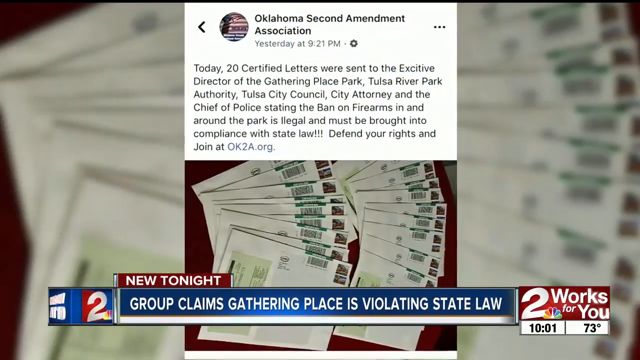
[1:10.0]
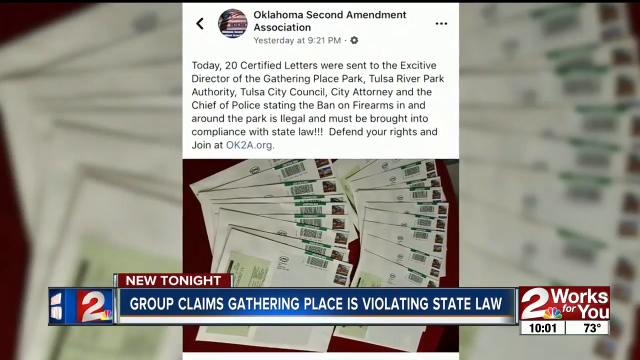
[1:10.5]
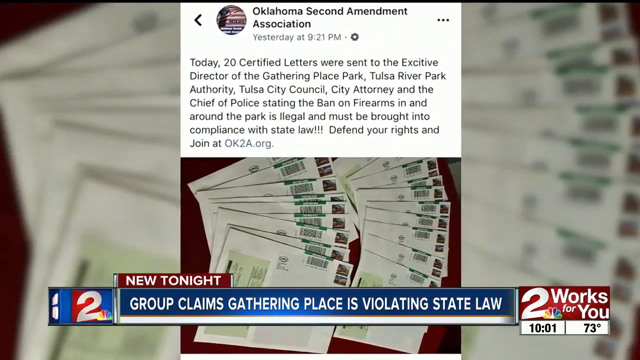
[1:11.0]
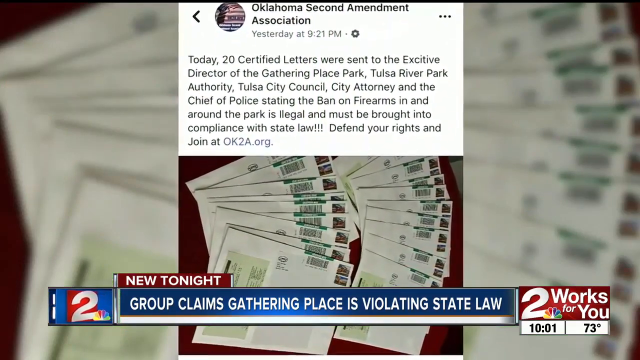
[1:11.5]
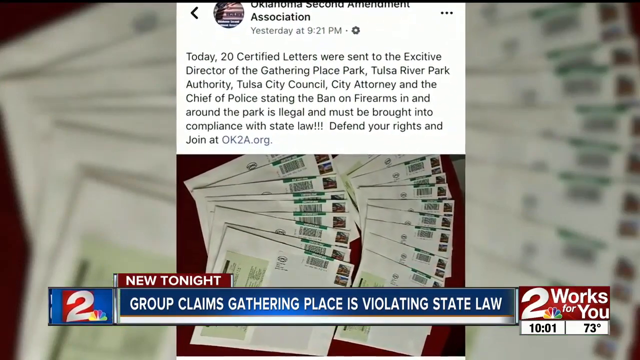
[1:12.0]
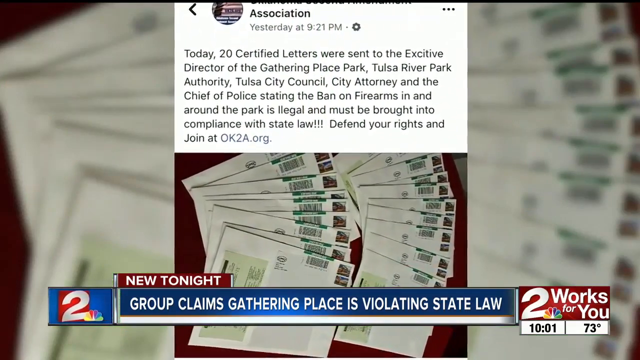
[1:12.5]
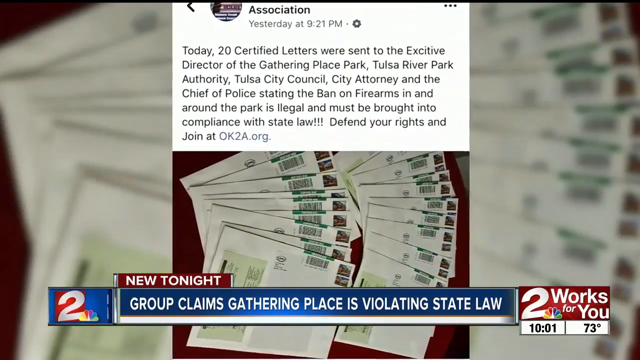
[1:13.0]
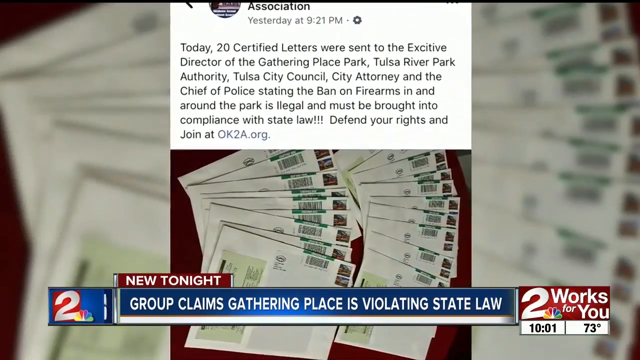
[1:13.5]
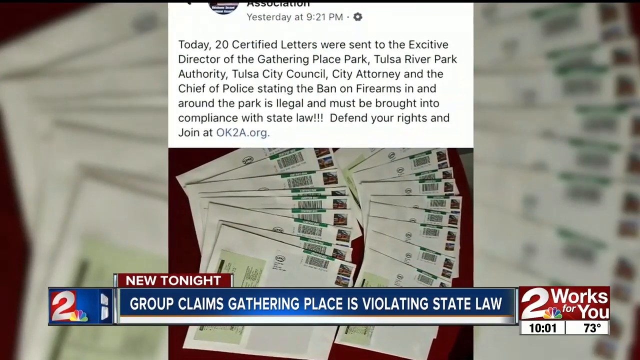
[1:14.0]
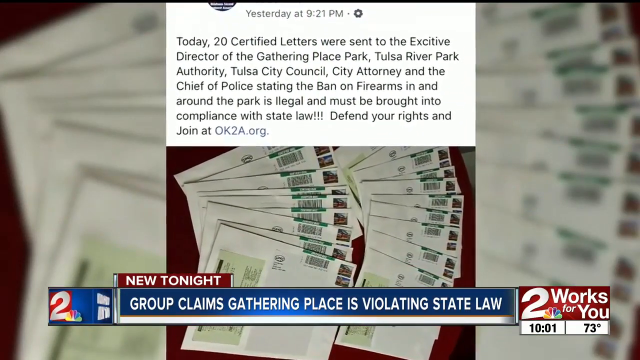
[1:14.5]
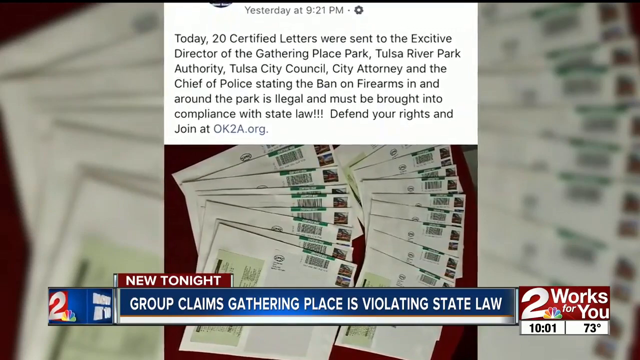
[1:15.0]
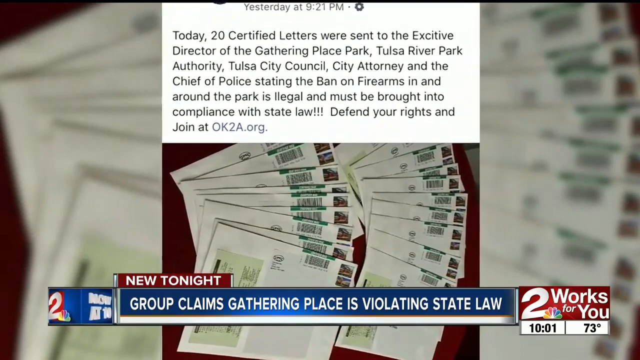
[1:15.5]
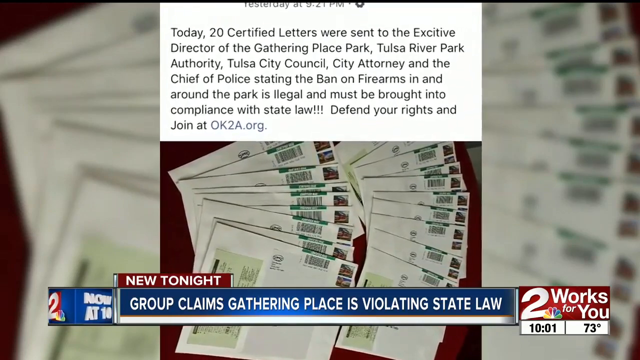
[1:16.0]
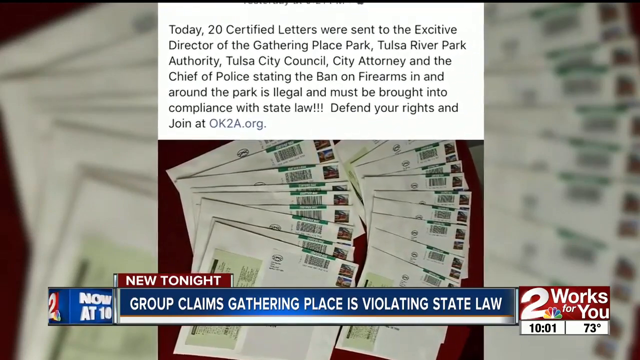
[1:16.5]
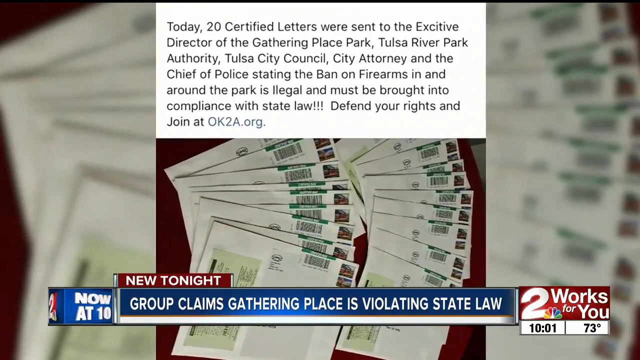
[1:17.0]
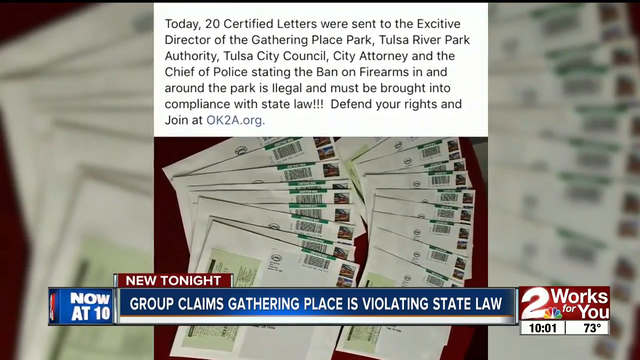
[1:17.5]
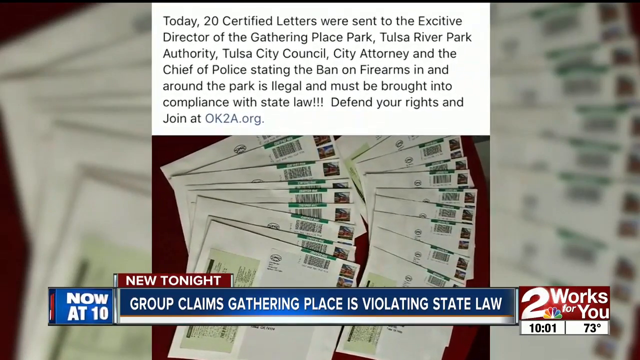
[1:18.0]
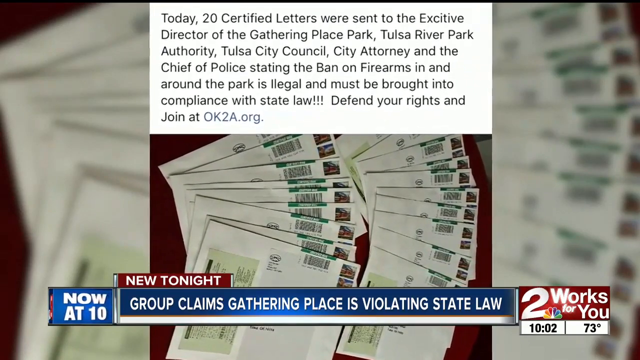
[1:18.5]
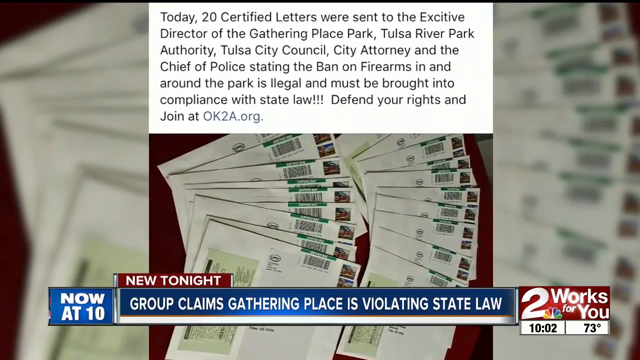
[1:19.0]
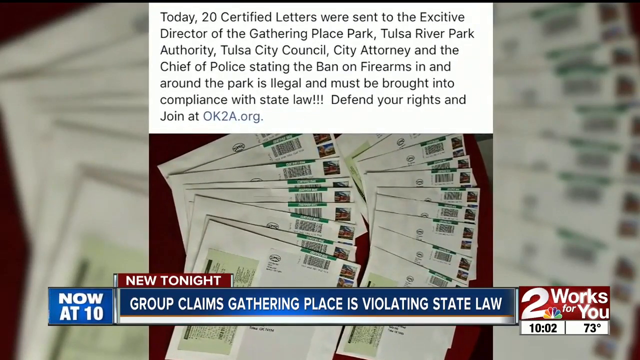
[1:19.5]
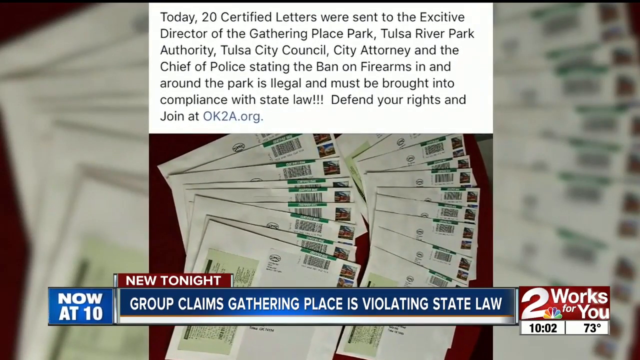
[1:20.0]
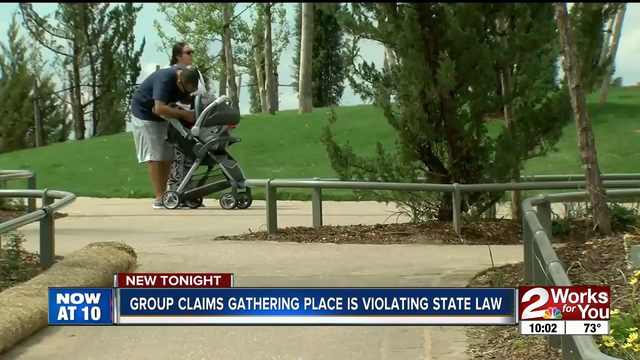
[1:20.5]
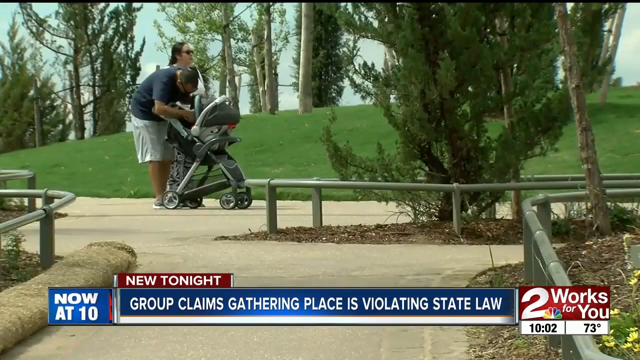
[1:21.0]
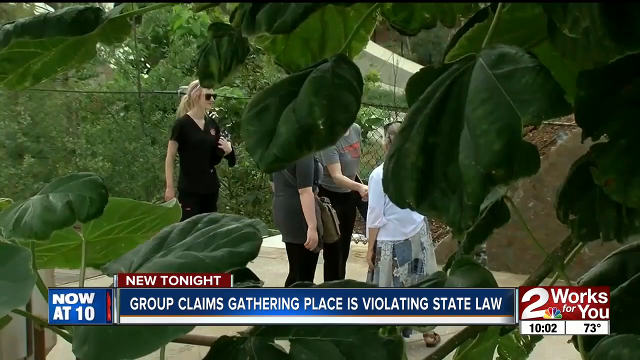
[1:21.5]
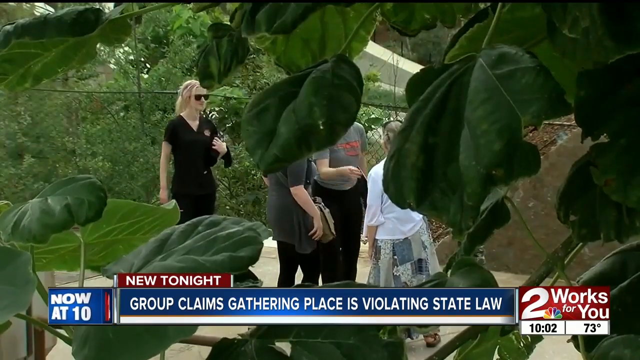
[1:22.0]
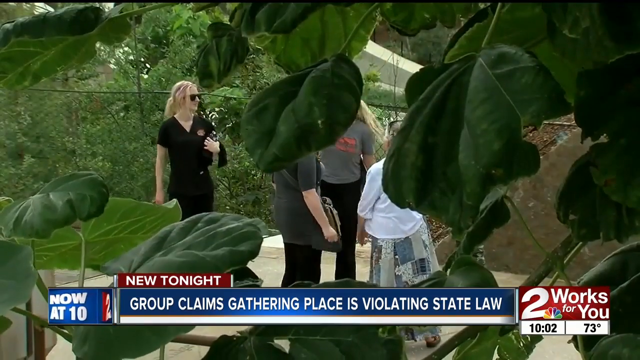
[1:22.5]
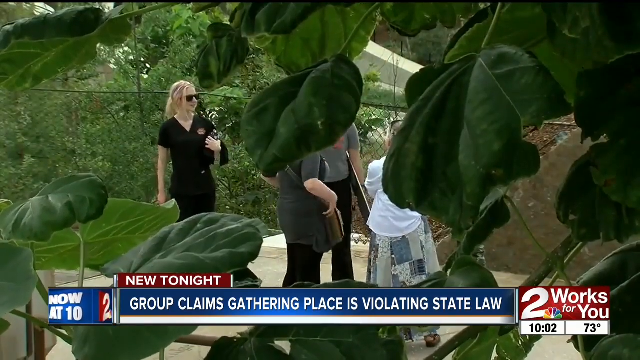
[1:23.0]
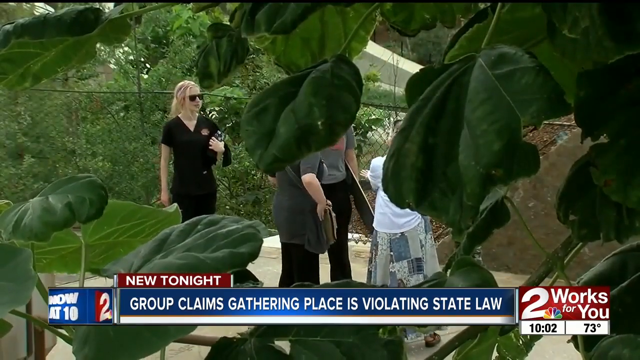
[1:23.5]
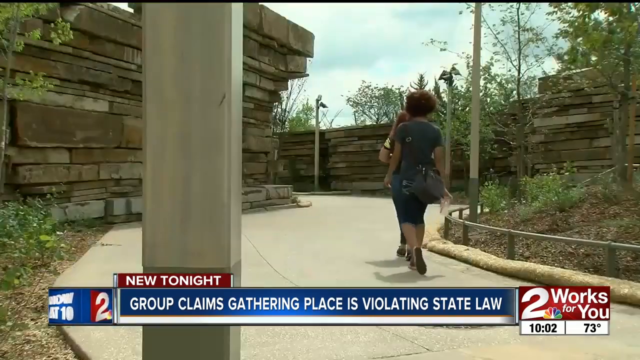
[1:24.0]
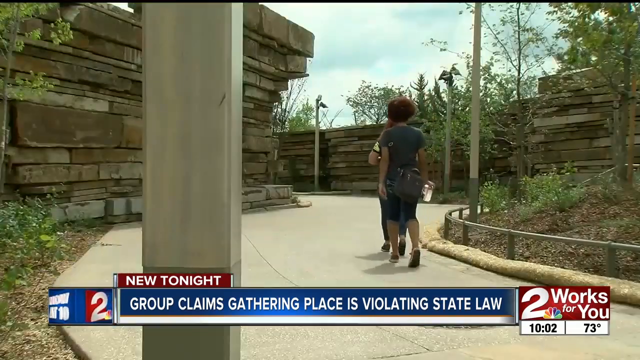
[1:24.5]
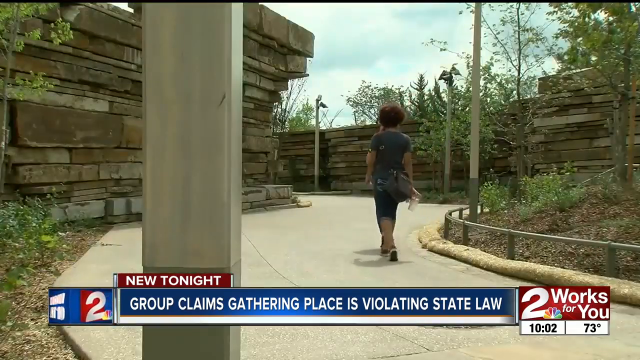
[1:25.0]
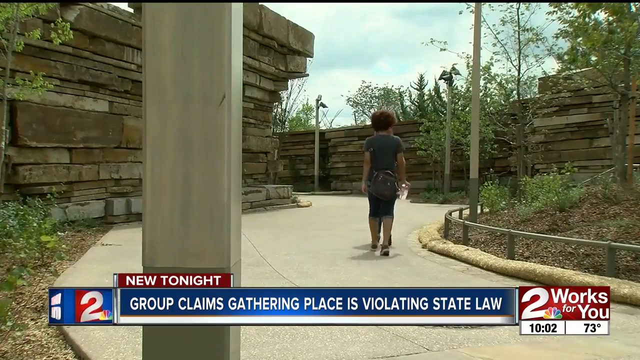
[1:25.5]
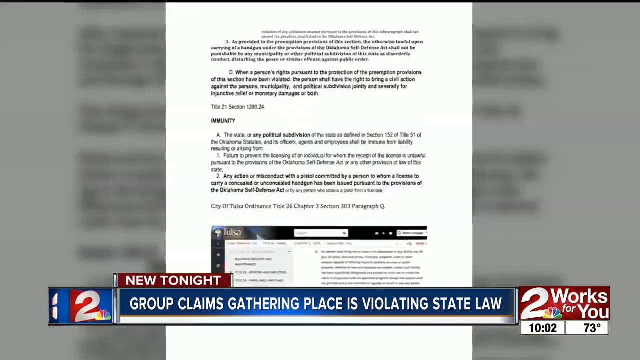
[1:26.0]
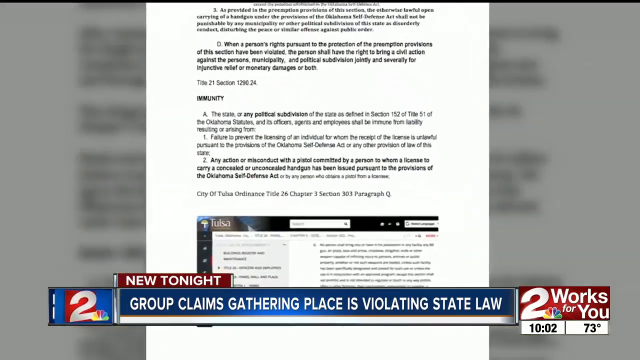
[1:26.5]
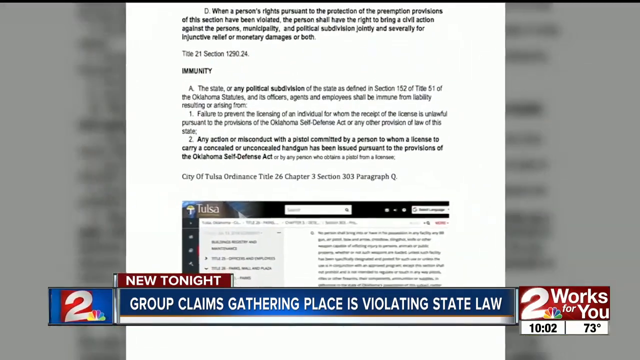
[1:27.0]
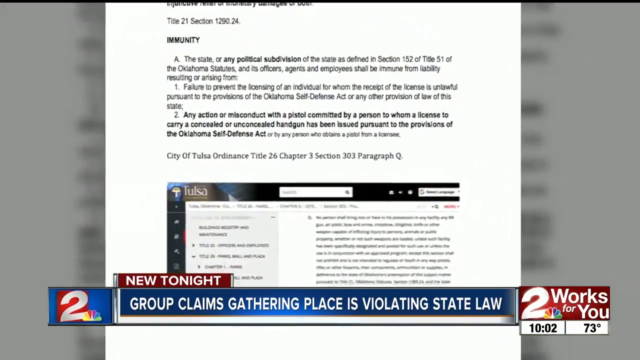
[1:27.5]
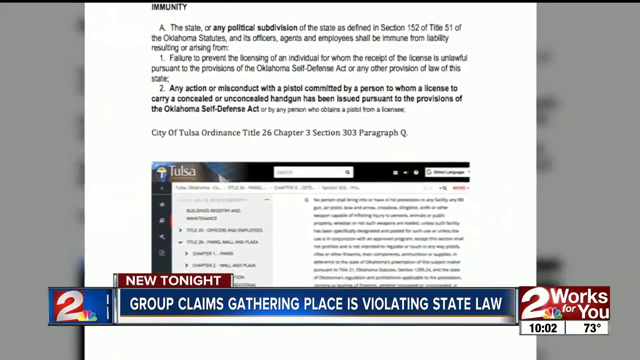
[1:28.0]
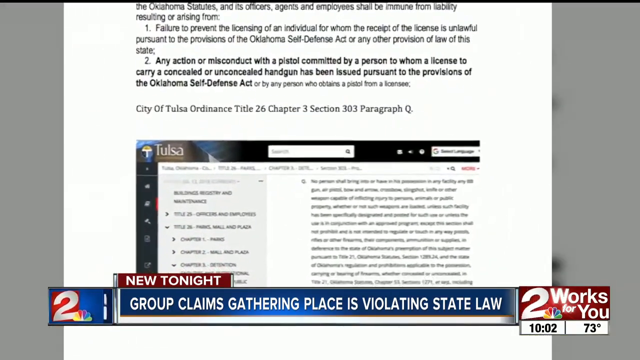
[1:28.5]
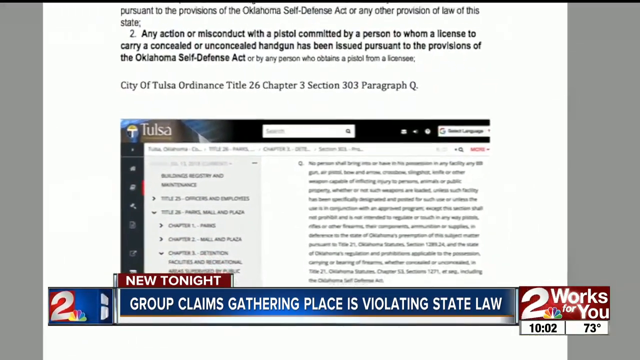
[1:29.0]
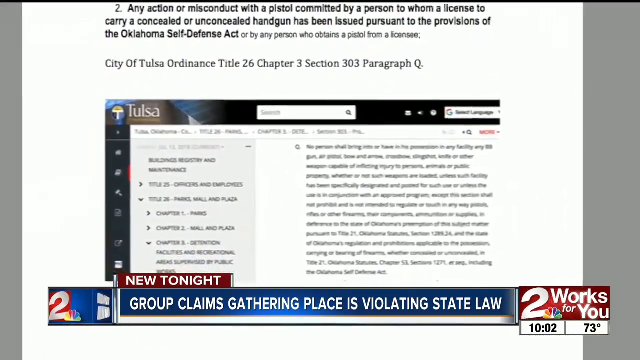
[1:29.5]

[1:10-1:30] On-screen text states that certified letters were sent to an executive director, a park authority, a city council, a city attorney and a chief of police, and that "the ban of firearms in and around the" park "is illegal". The words "violating state law" are shown. Two people hold babies, and other people seem to be communicating. The video switches to individuals taking a video next to some trees, then back to a woman walking down the street with a paper of some sort containing information about what is going on with the park.